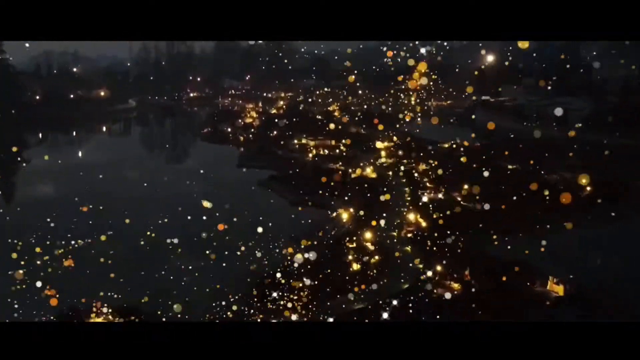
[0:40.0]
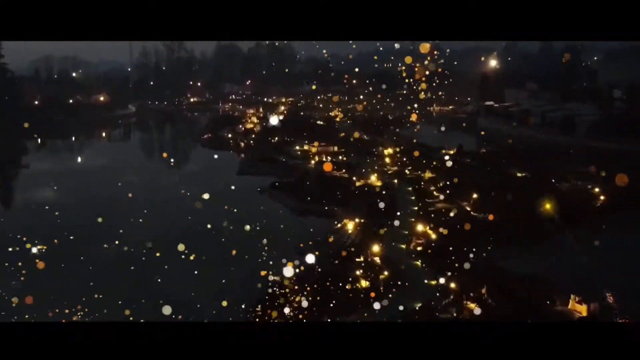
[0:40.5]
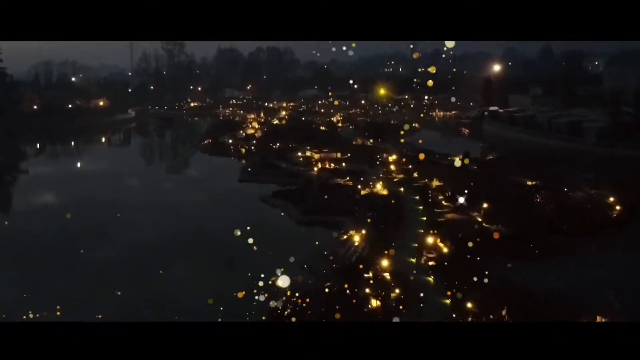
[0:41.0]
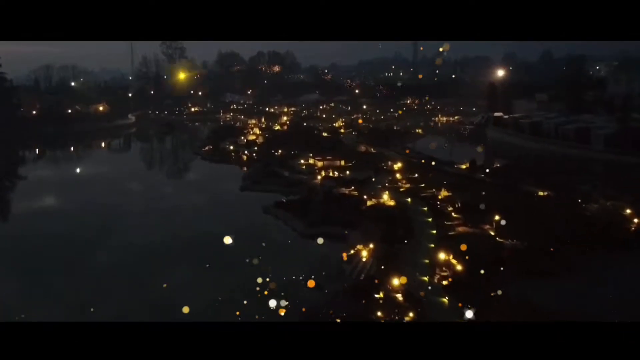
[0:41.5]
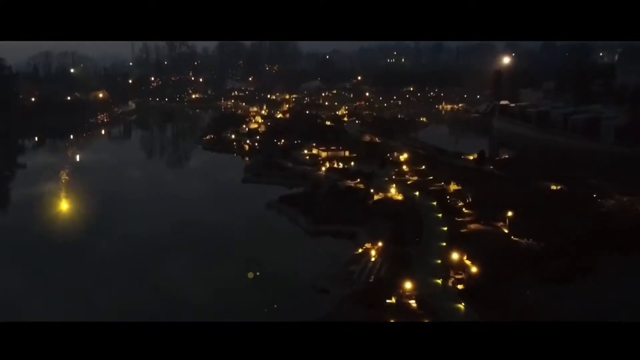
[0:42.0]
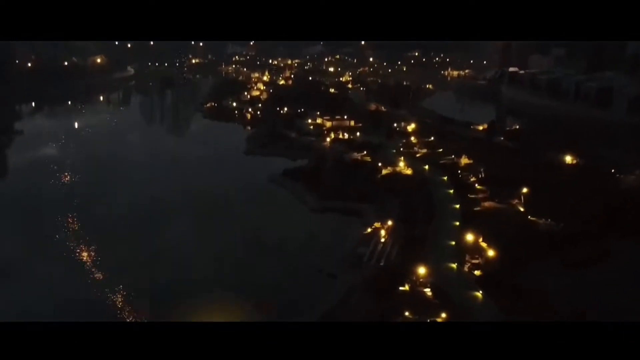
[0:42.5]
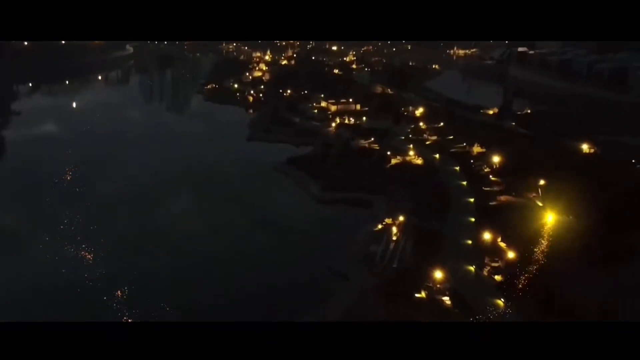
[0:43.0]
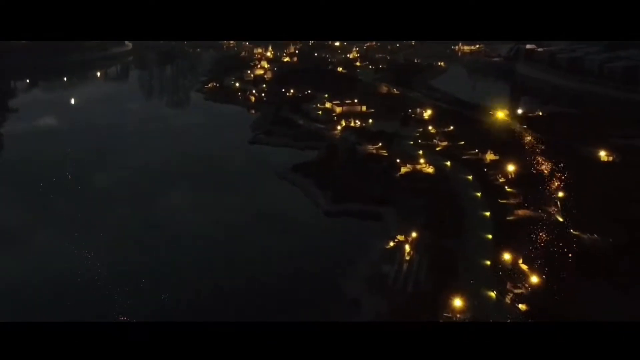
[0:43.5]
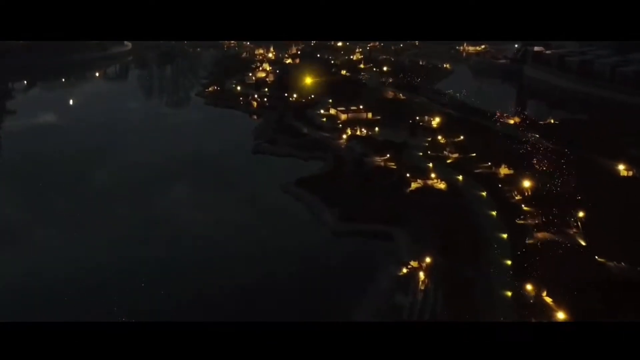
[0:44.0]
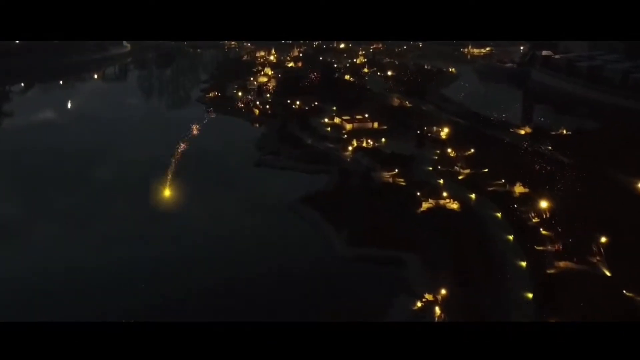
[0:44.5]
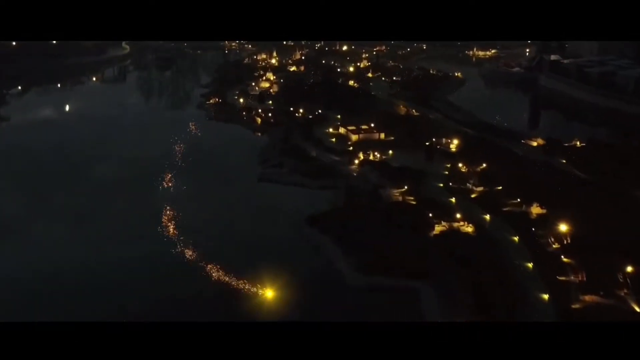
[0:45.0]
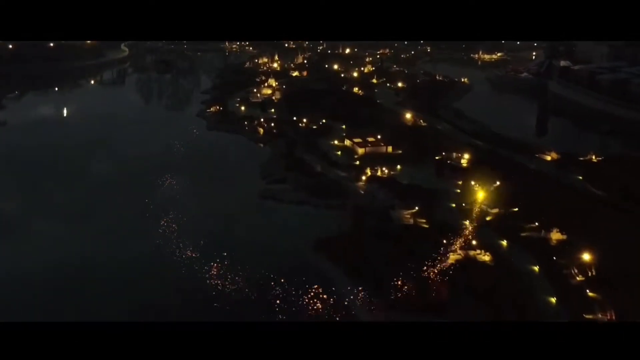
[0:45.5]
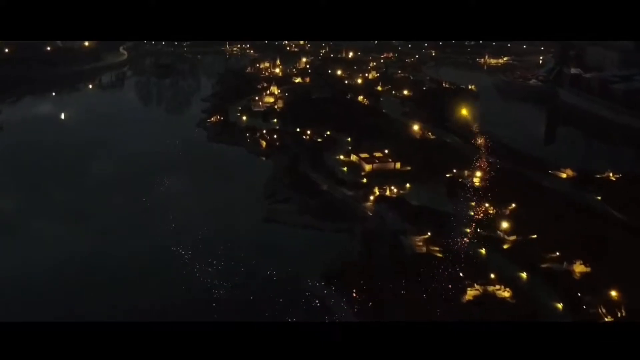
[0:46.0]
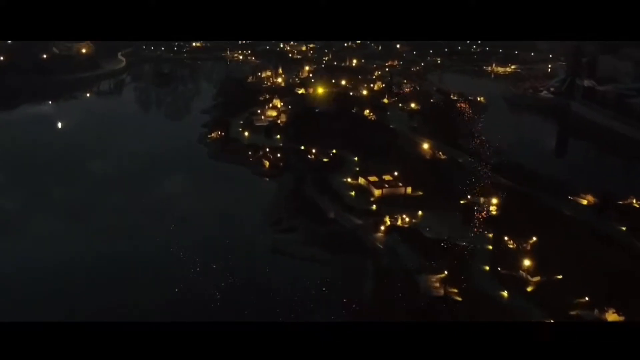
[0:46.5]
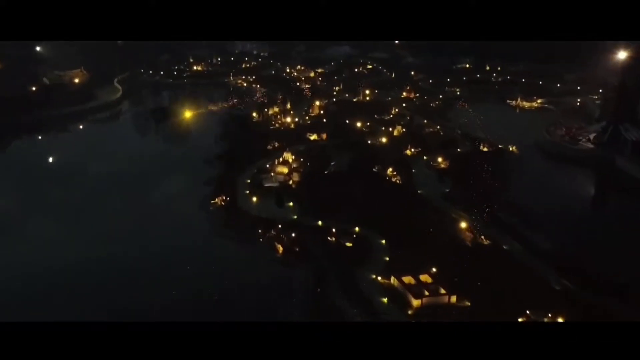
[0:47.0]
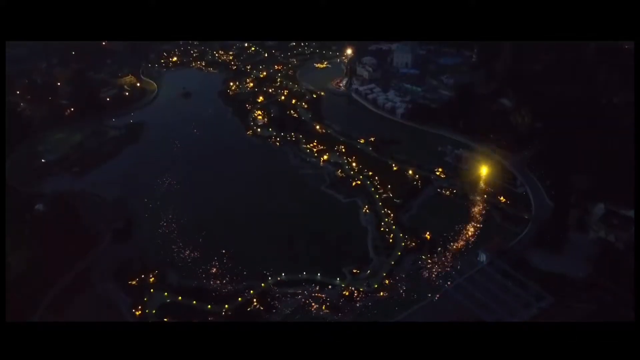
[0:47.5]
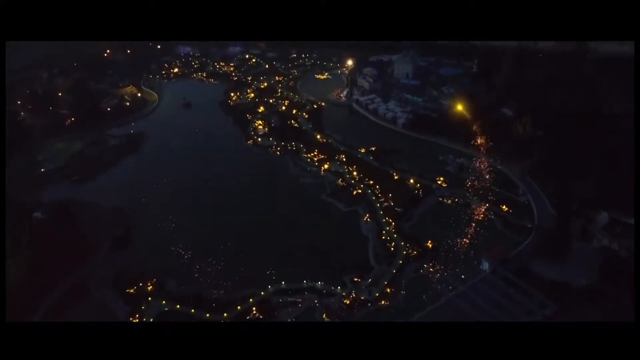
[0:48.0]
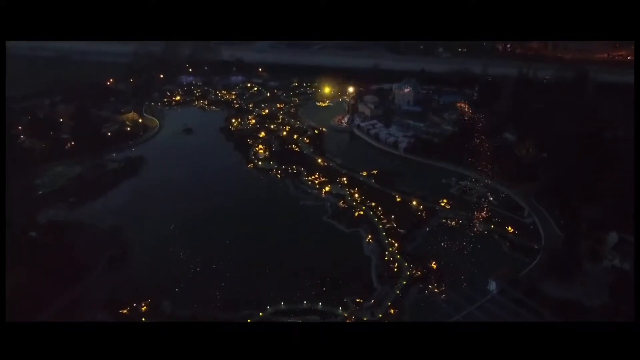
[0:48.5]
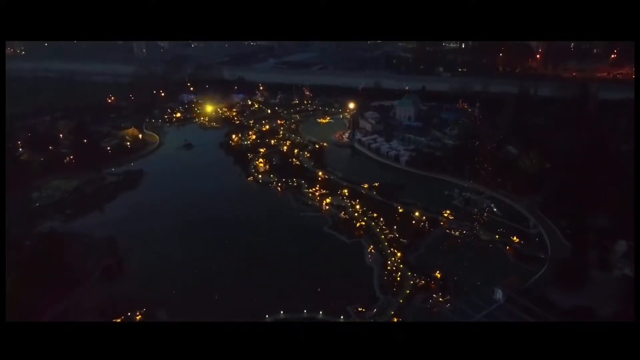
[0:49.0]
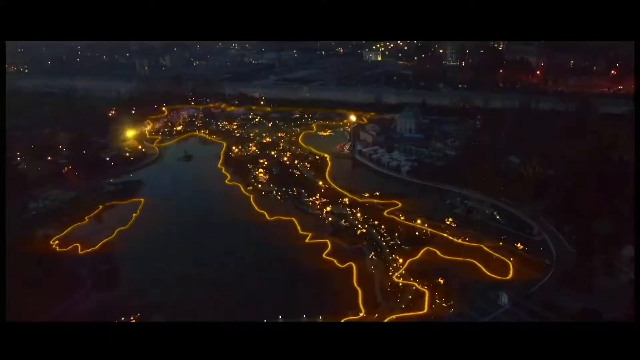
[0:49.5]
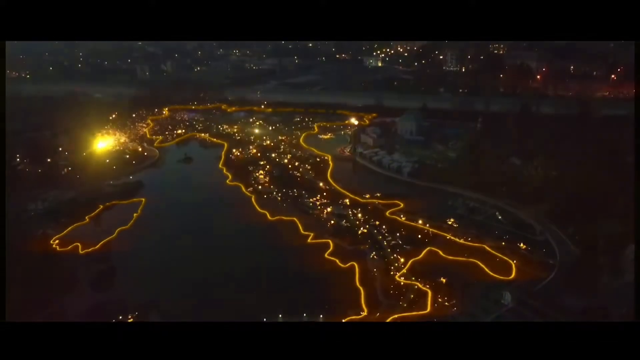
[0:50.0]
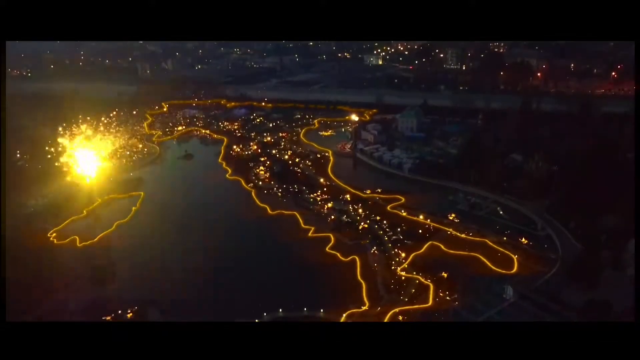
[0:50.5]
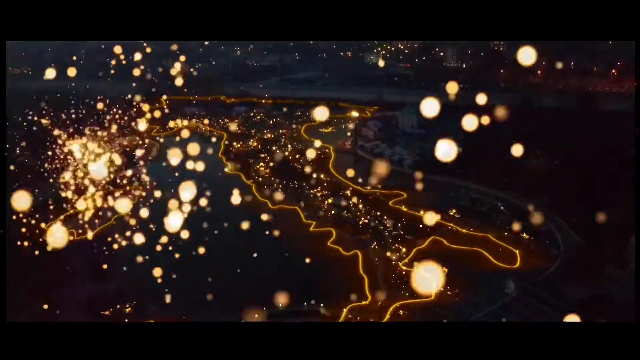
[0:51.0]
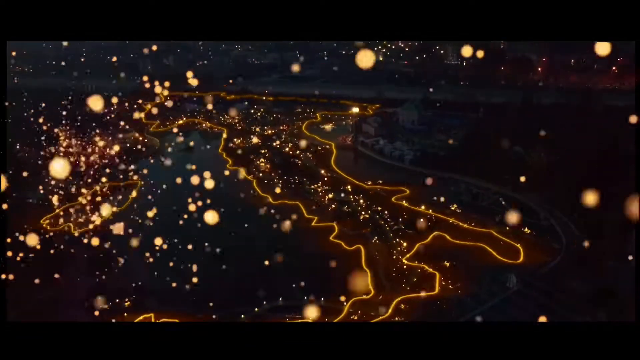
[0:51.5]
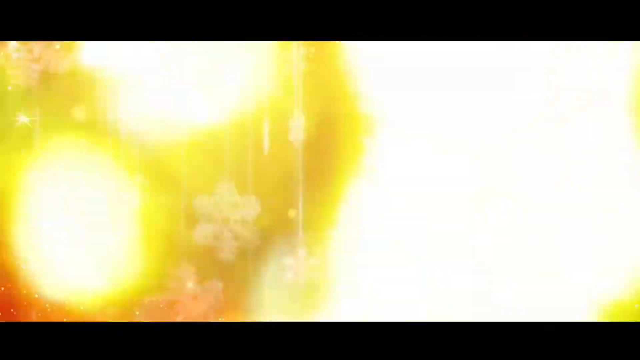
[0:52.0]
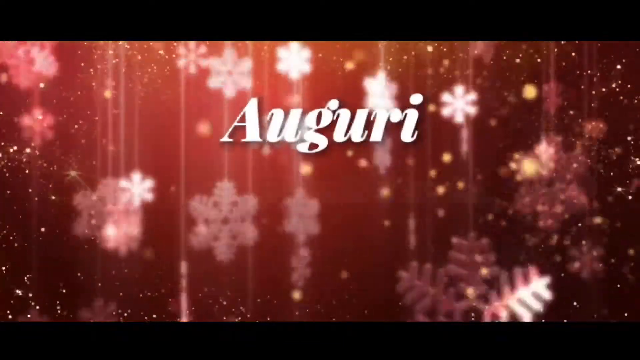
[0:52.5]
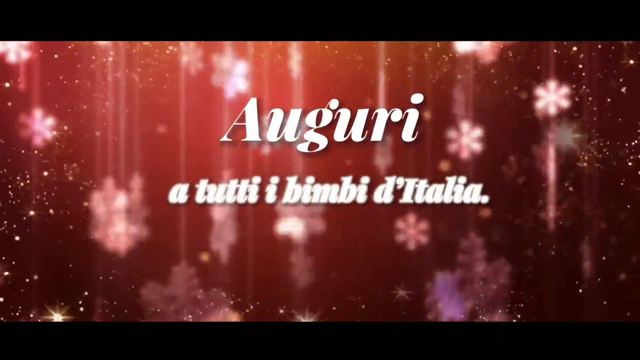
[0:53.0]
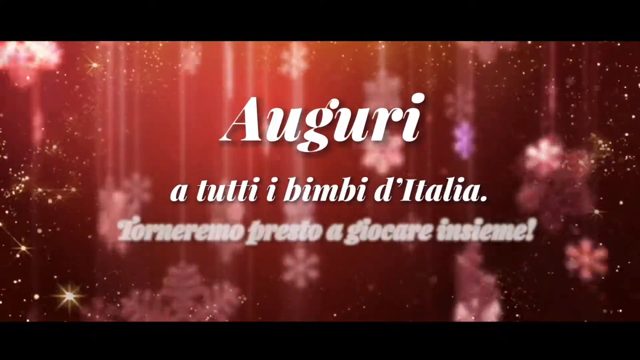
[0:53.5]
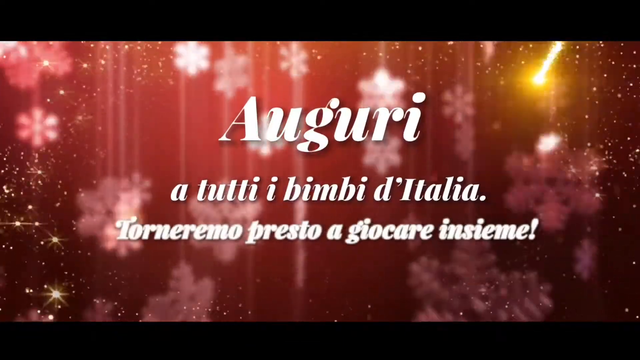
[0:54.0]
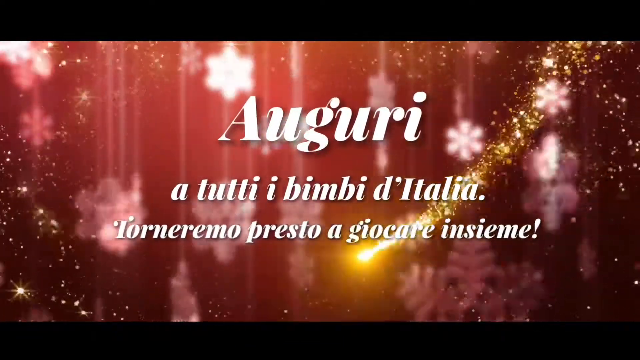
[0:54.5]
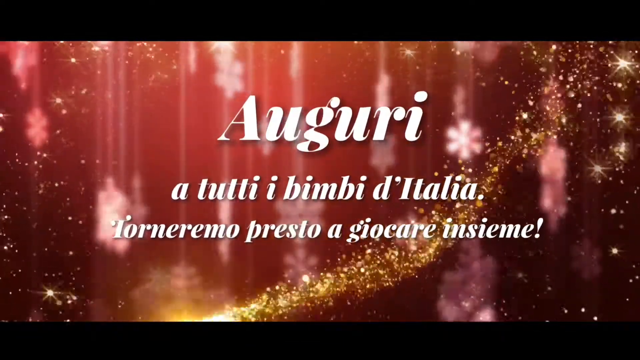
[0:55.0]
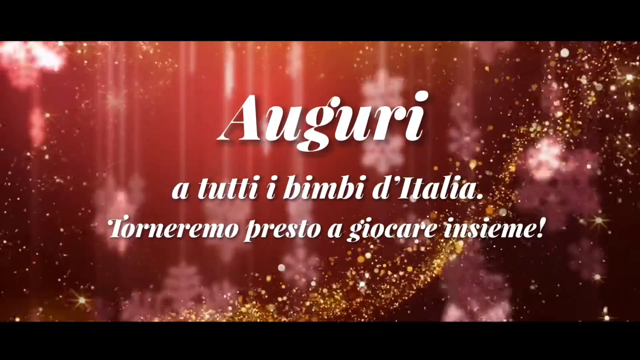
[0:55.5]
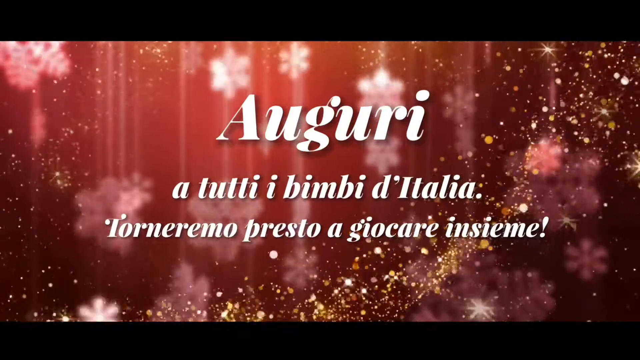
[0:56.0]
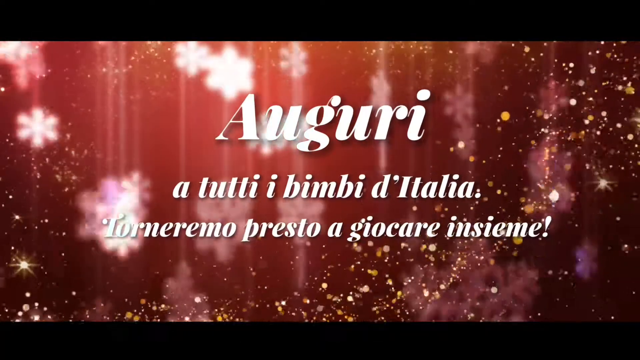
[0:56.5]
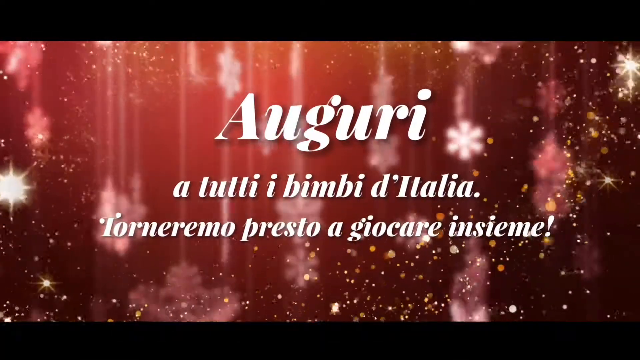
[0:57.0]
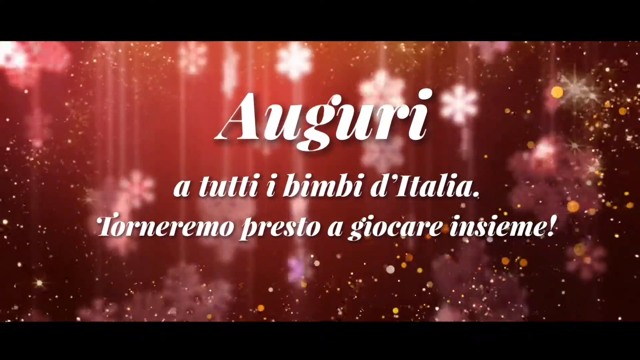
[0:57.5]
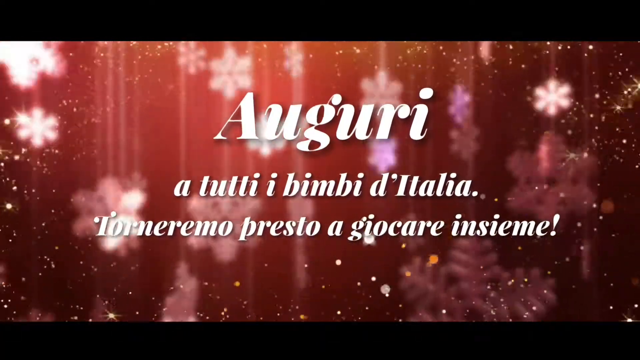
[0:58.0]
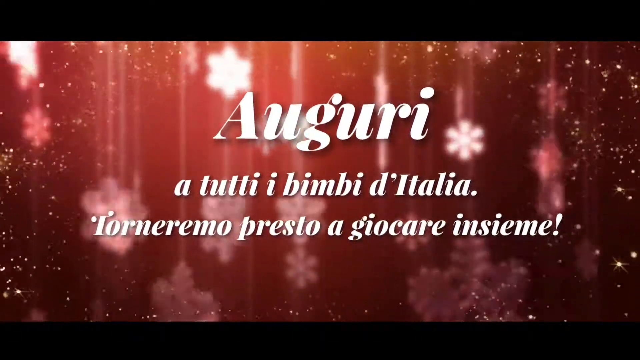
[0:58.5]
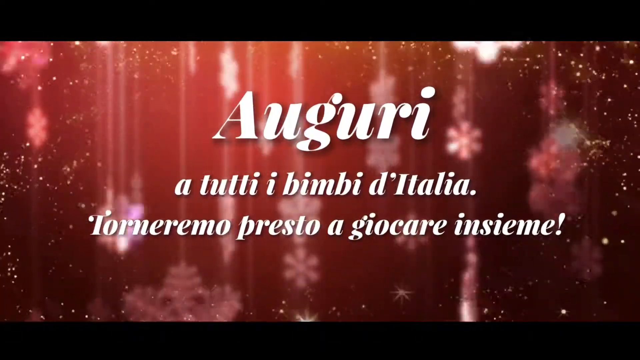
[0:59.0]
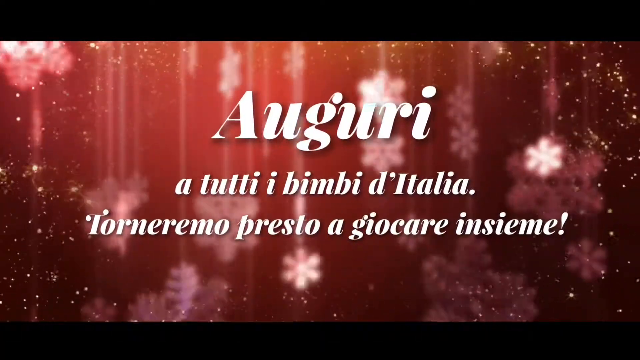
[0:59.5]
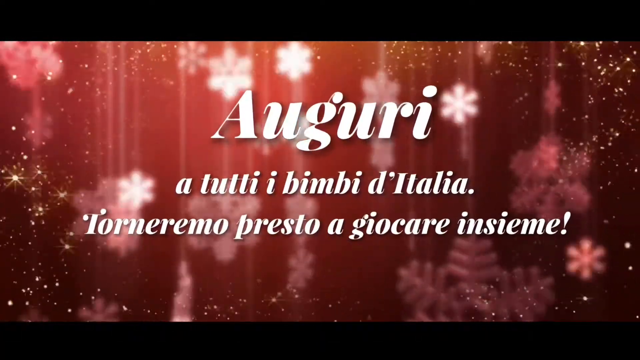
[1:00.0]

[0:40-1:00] Light flies everywhere as a little bulb of light flies across the scene, with two sides of a lake visible. The whole land is lit up or outlined as if by a highlighter. An ending message appears in an unidentified language, probably something like Merry Christmas. The words are white on a dark velvet red background, with snowflakes flickering in the background and many sparkles across the screen. The snowflakes spin around, held by string.